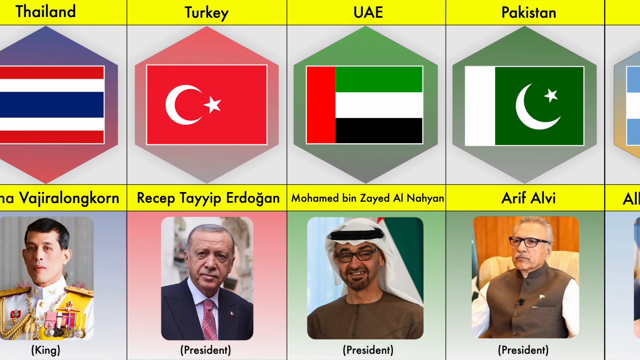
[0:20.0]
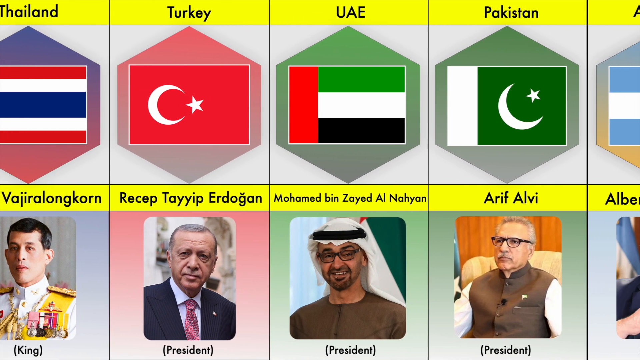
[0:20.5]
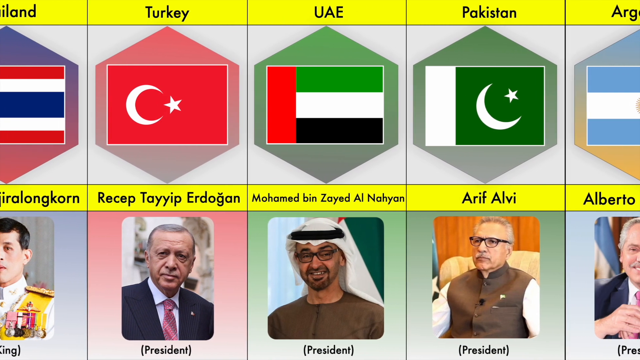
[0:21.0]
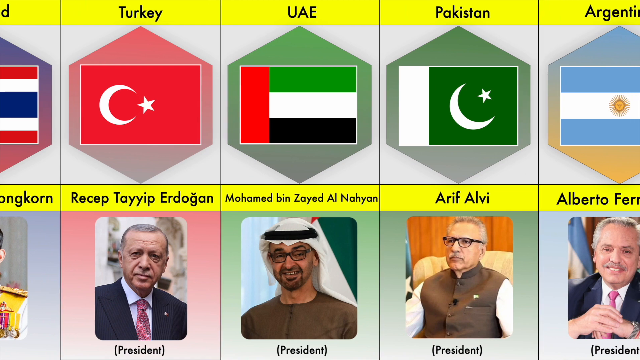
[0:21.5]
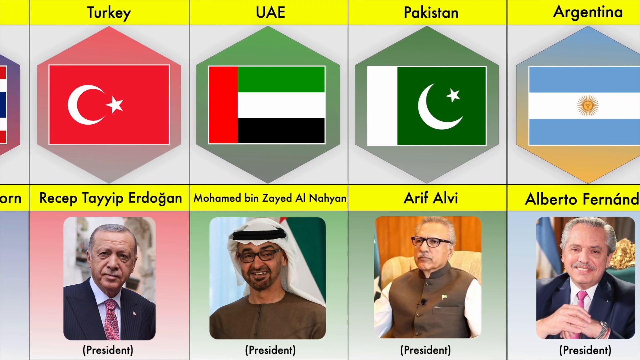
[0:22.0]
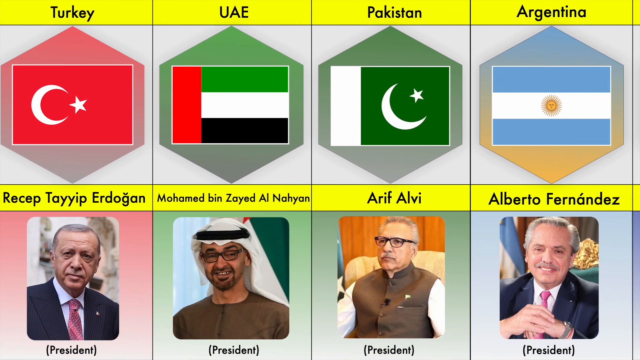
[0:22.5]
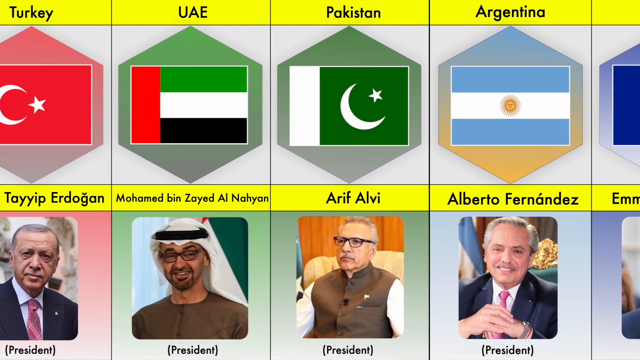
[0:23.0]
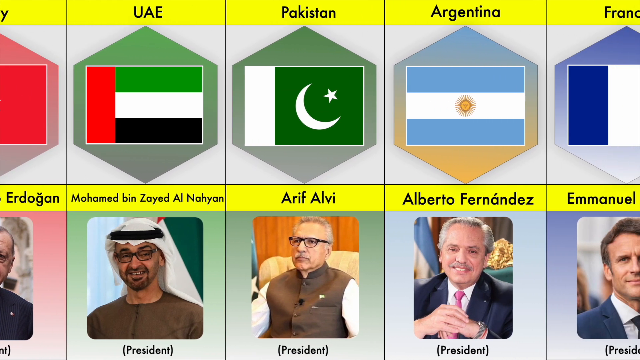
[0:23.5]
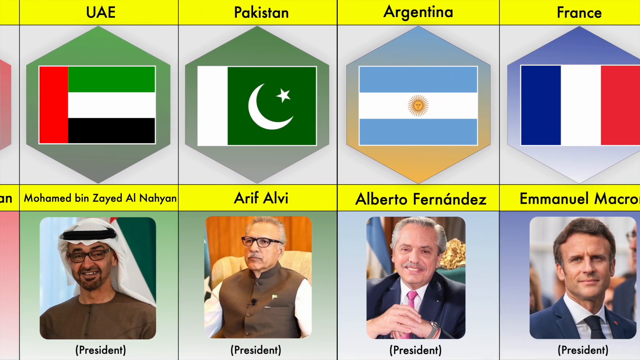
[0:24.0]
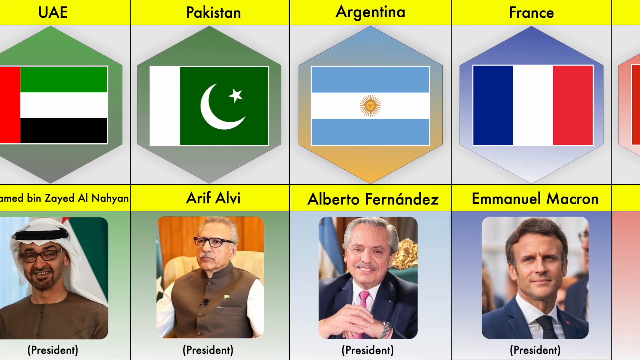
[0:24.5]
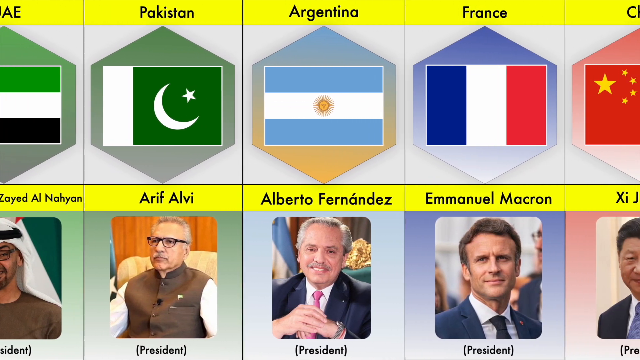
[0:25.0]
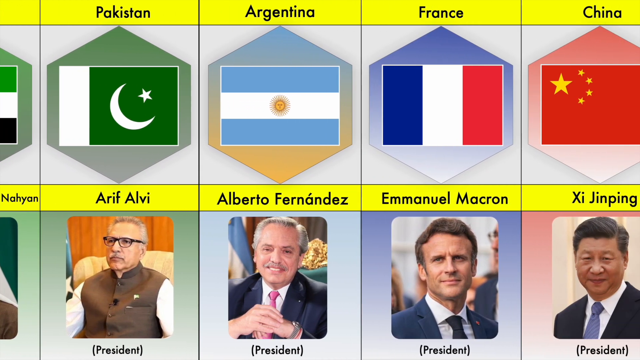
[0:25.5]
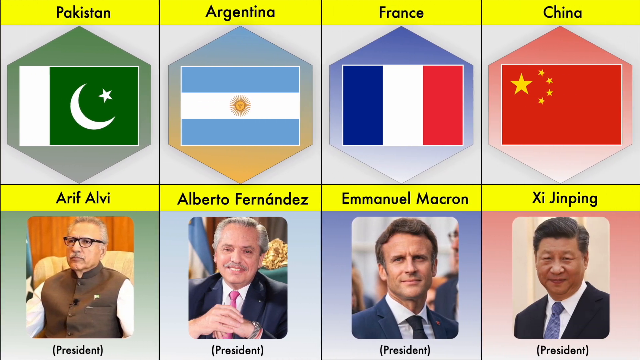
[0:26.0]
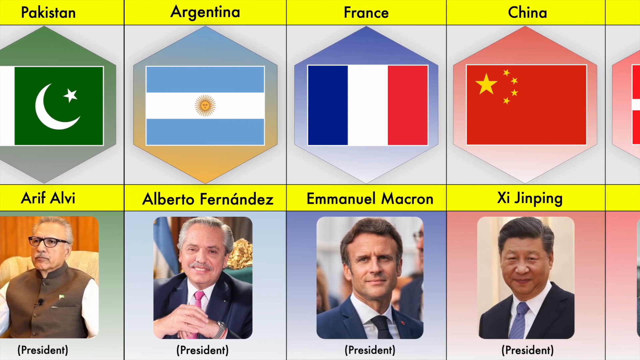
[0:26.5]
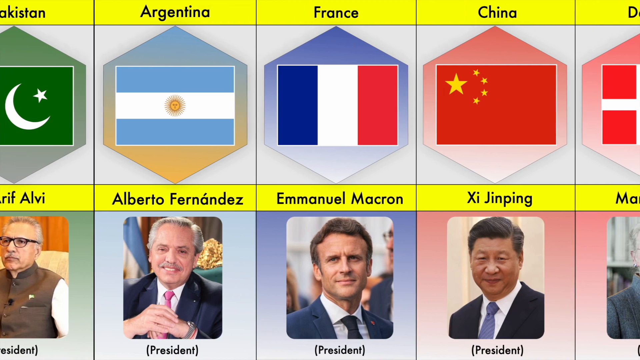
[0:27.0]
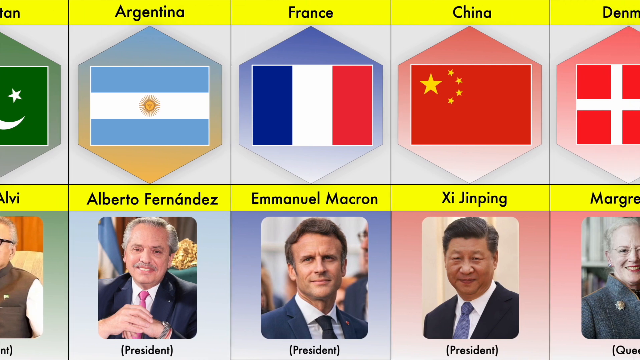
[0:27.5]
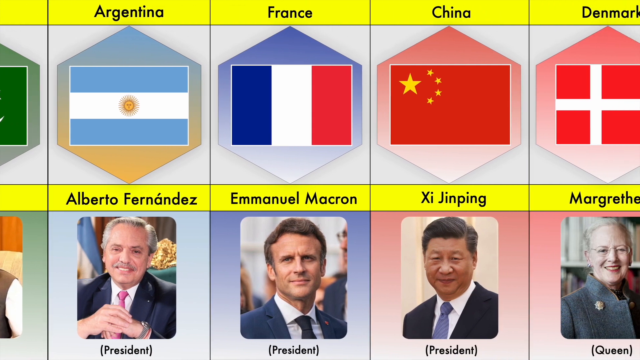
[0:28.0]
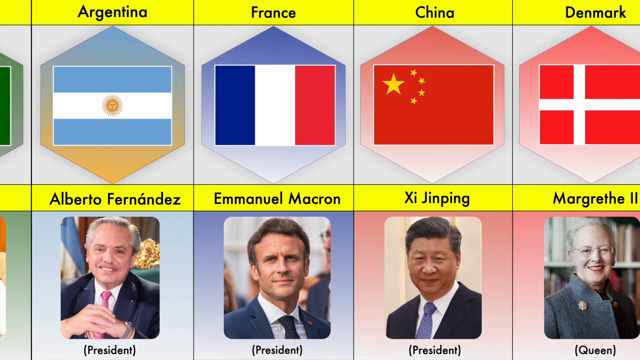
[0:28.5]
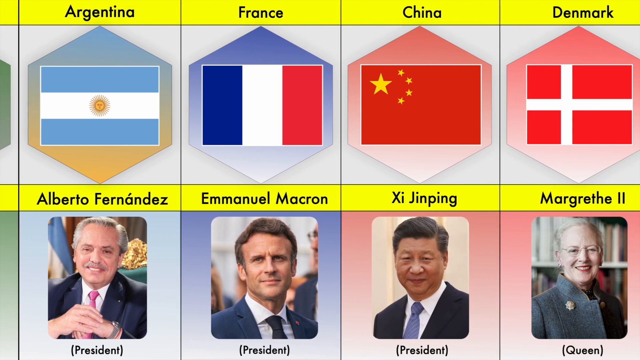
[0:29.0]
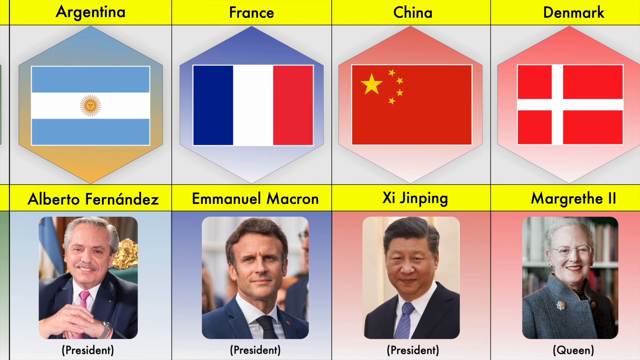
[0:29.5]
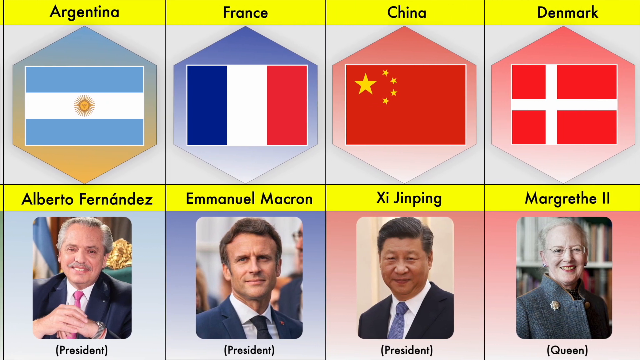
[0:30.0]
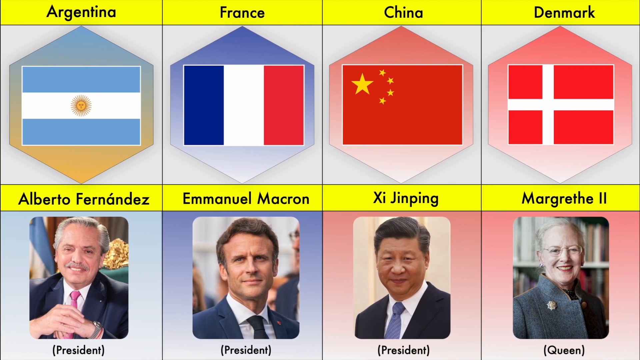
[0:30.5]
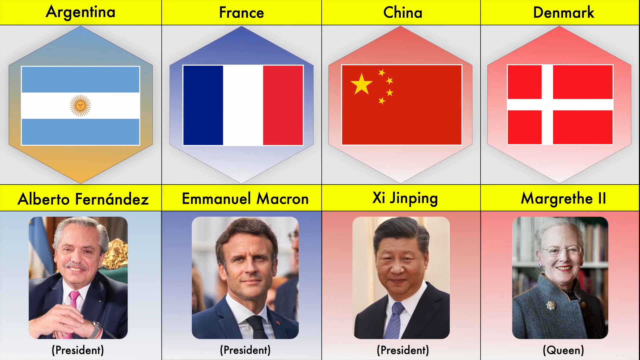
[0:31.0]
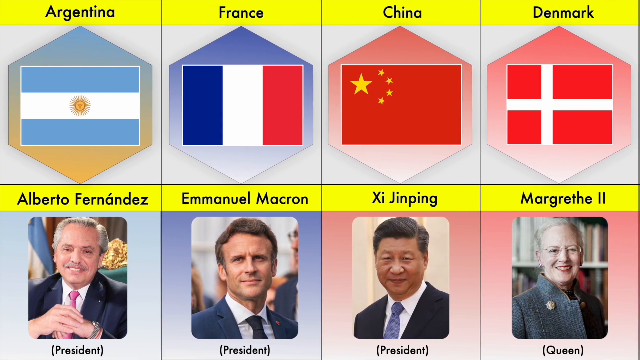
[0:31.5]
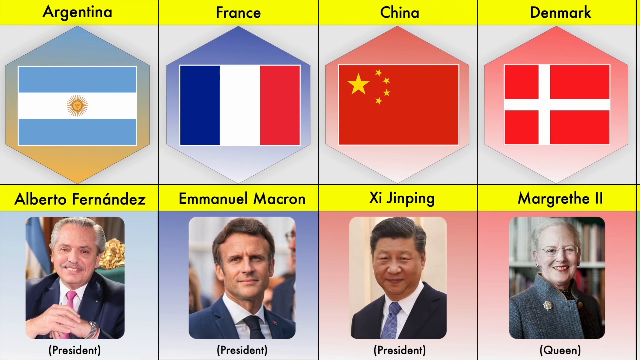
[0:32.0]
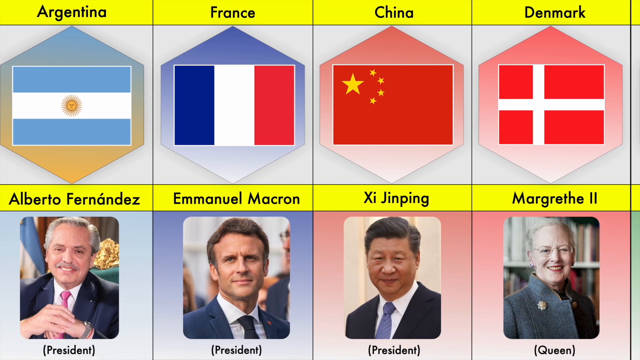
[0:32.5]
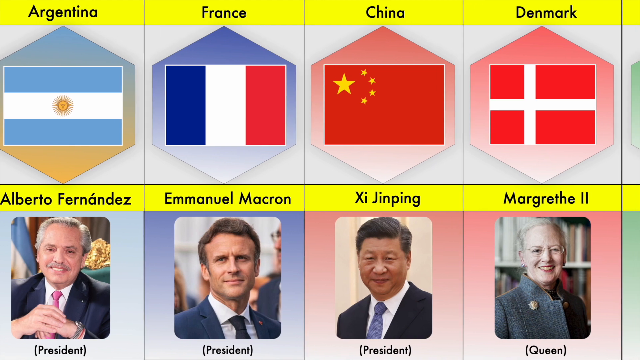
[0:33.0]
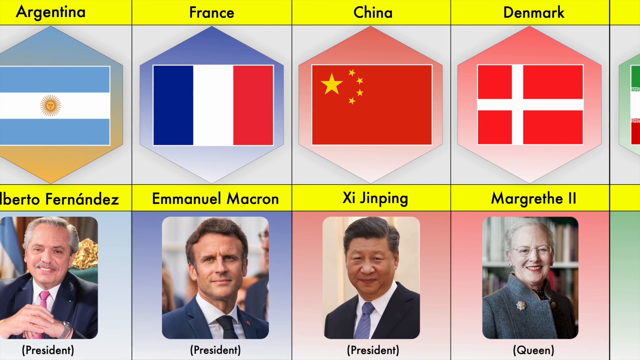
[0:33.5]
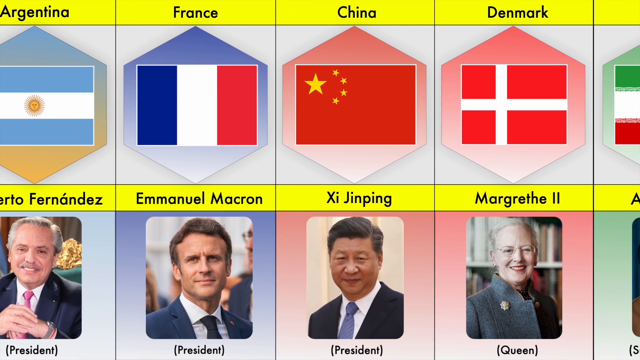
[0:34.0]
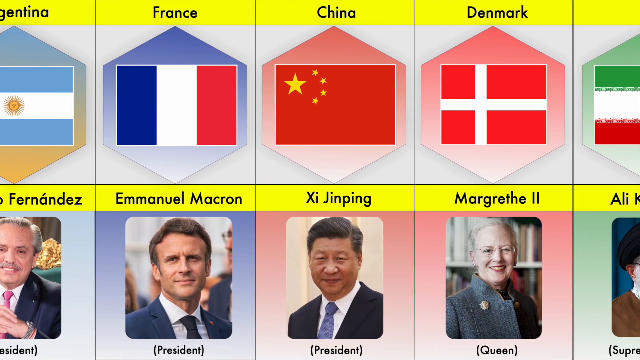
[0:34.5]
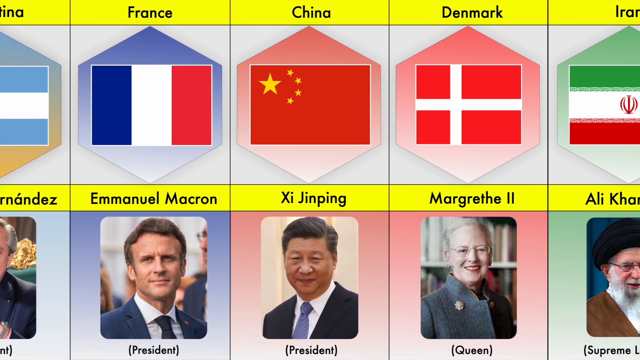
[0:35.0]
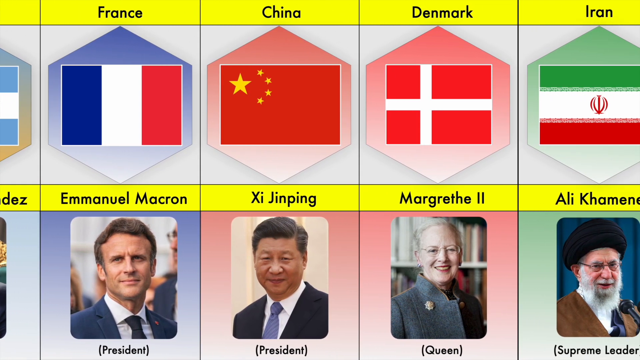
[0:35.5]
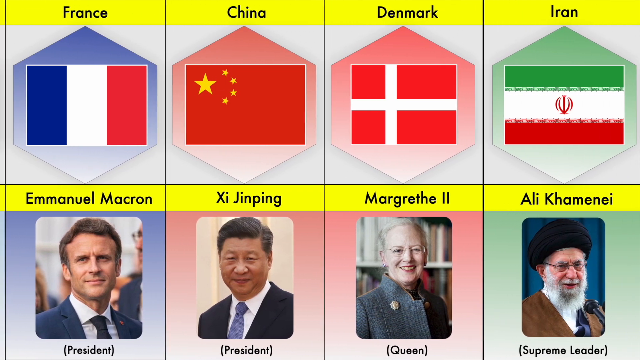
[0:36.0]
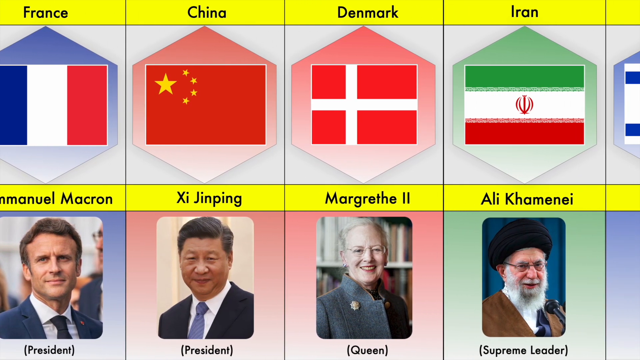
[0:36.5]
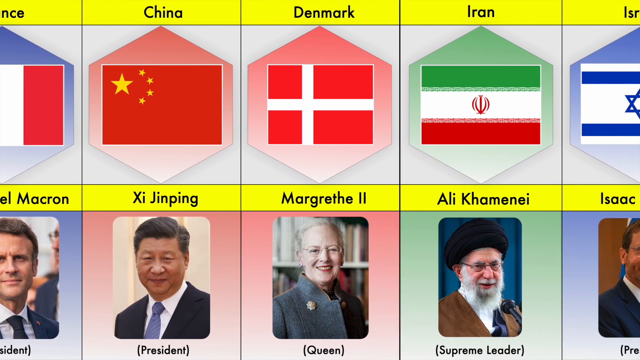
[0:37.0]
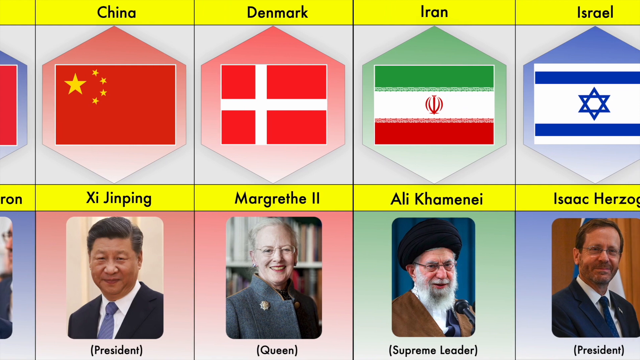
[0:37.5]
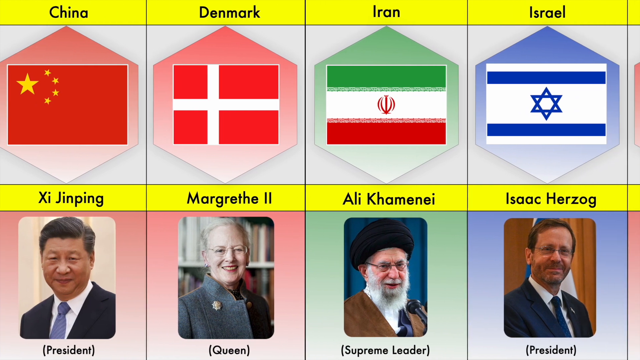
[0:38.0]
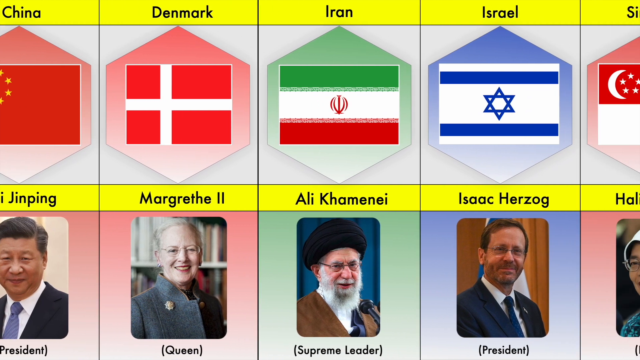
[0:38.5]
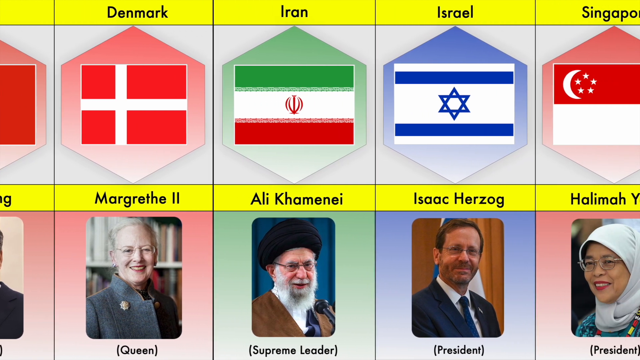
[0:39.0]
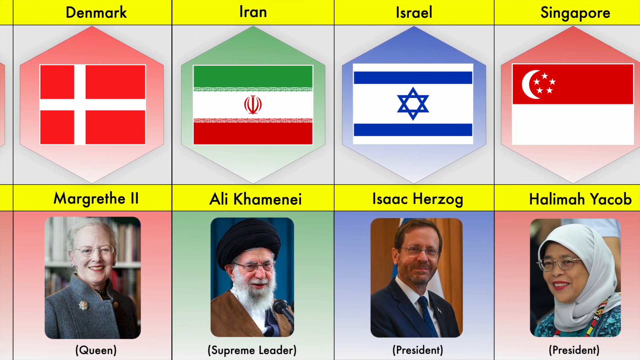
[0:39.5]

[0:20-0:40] Various world leaders are shown, each with a flag appearing directly above them so that every leader is matched with the flag they represent. Each leader appears in a portrait looking directly at the camera. Their titles vary: some appear to be presidents, others prime ministers, and others different kinds of leaders. At the very top of the screen, the English names of the countries are written in dark text on a yellow background.